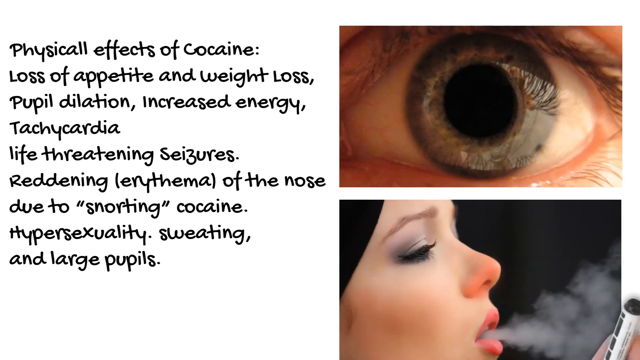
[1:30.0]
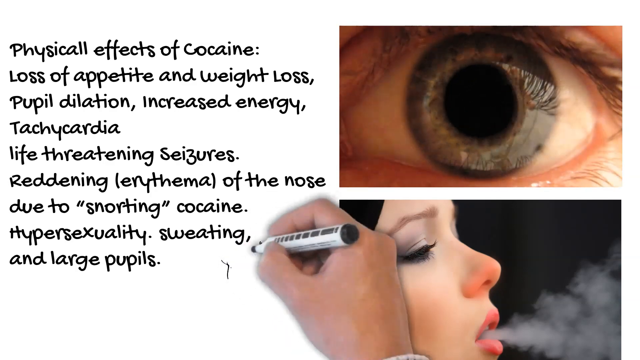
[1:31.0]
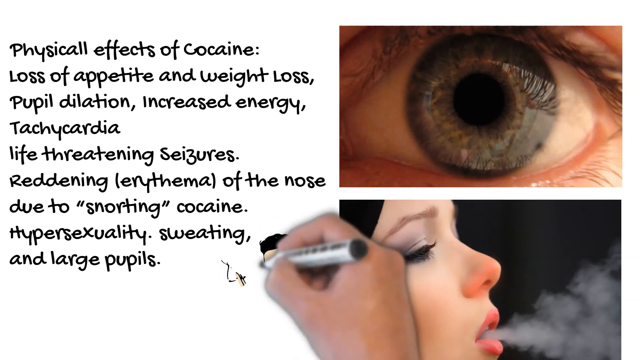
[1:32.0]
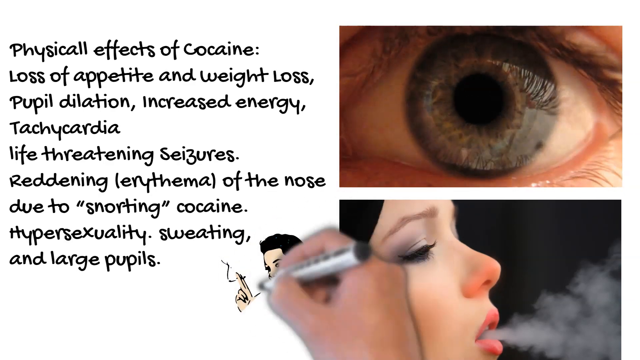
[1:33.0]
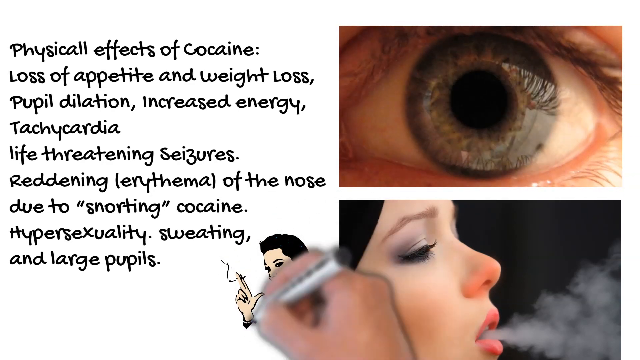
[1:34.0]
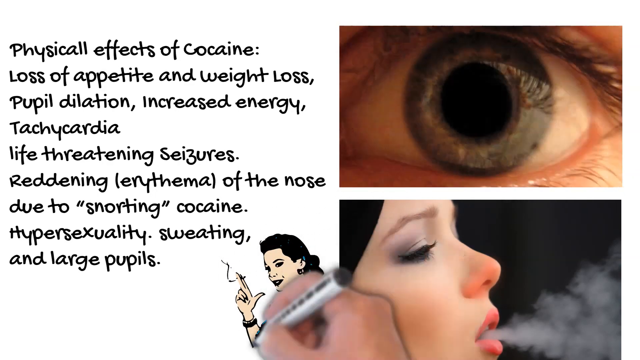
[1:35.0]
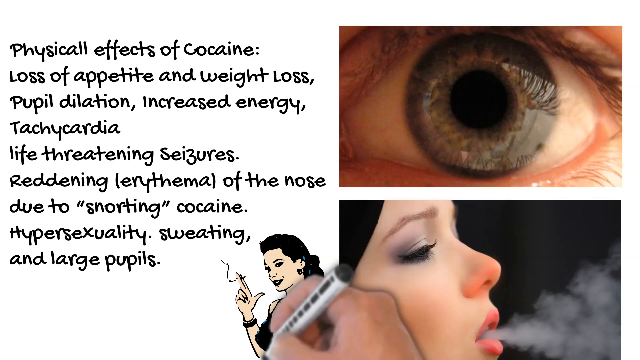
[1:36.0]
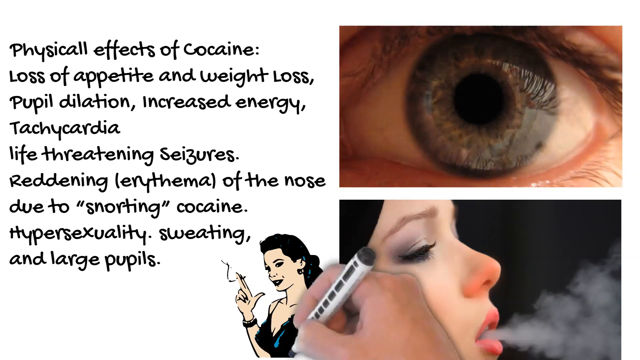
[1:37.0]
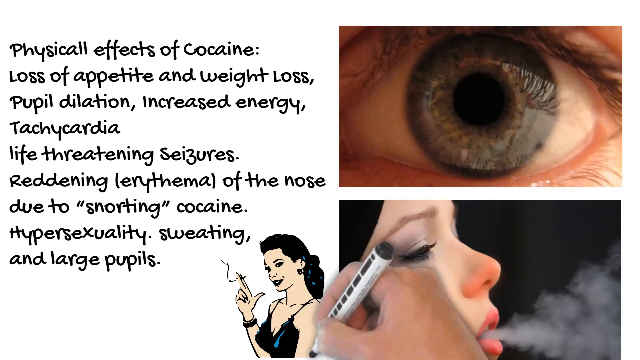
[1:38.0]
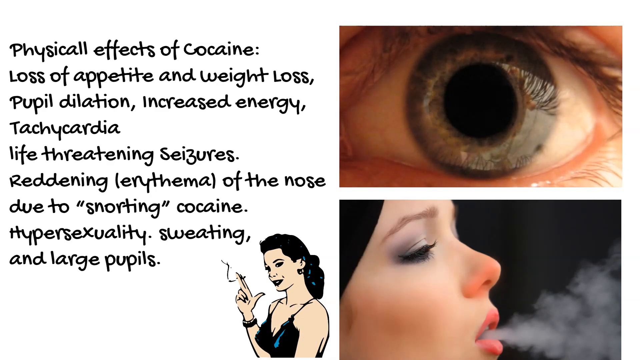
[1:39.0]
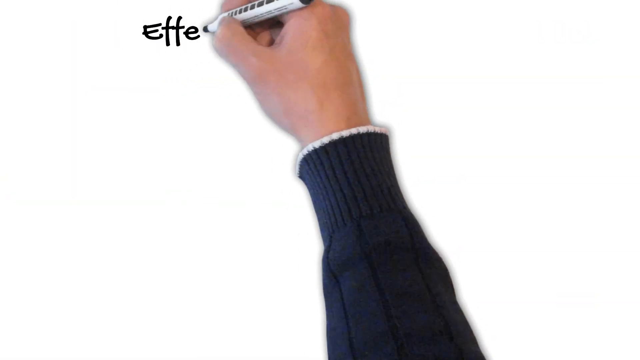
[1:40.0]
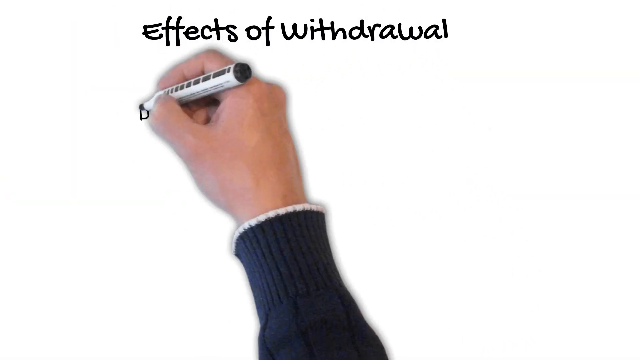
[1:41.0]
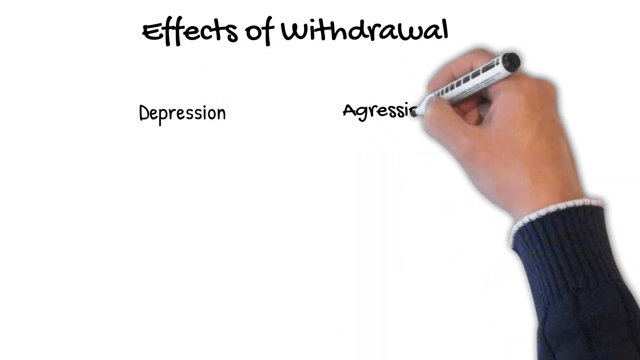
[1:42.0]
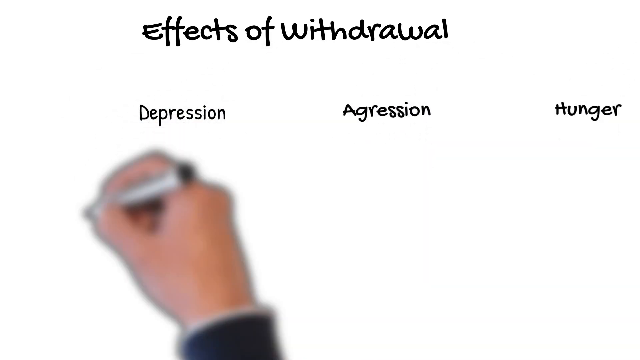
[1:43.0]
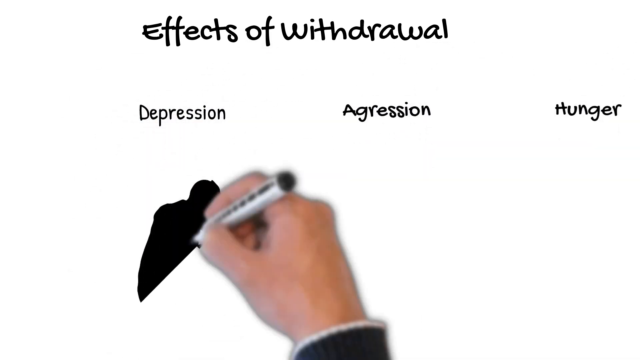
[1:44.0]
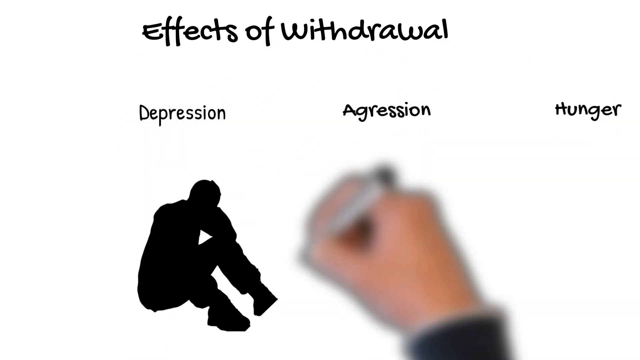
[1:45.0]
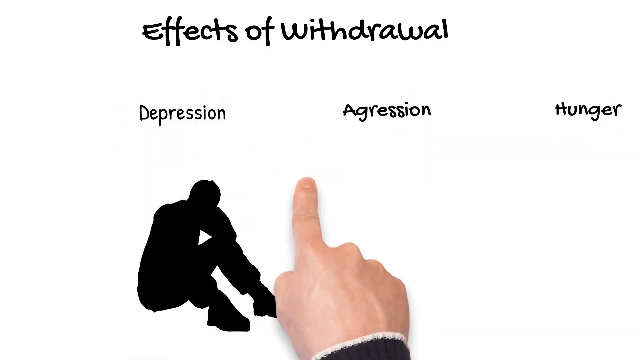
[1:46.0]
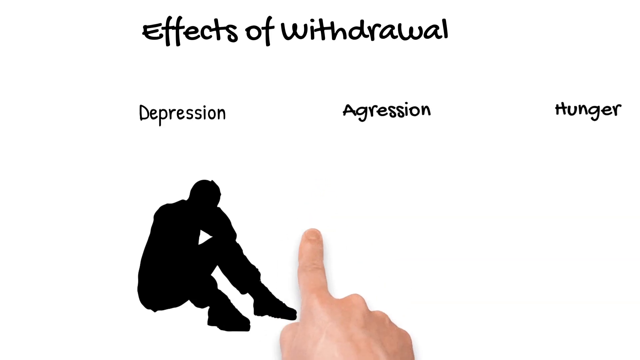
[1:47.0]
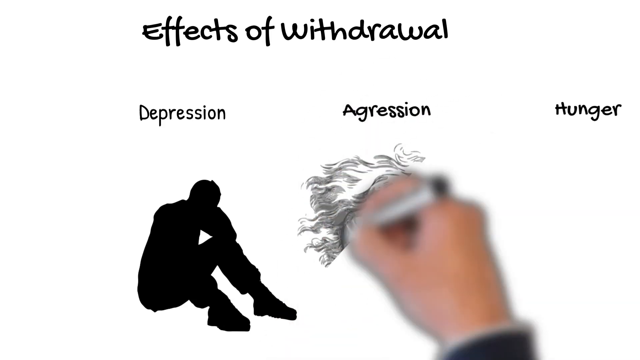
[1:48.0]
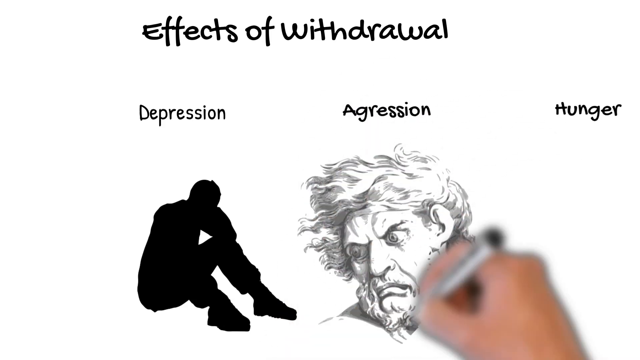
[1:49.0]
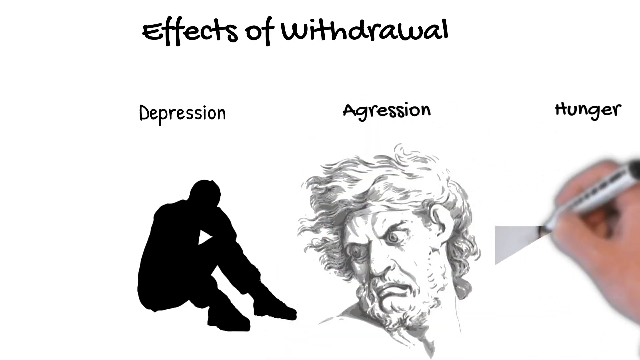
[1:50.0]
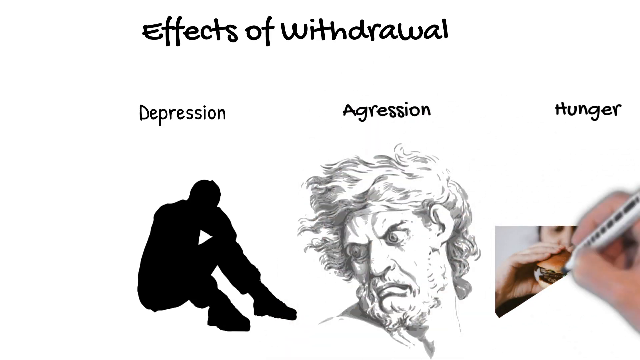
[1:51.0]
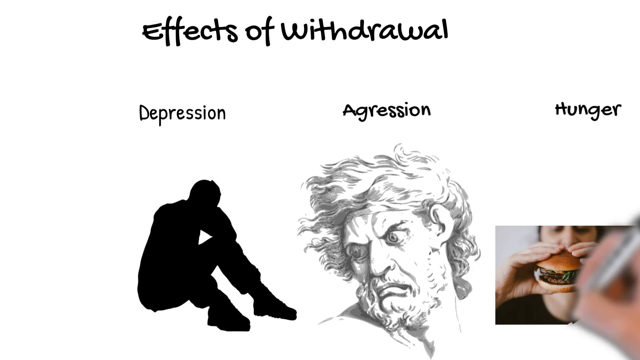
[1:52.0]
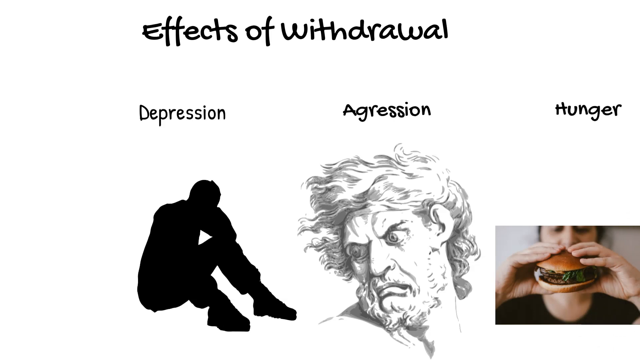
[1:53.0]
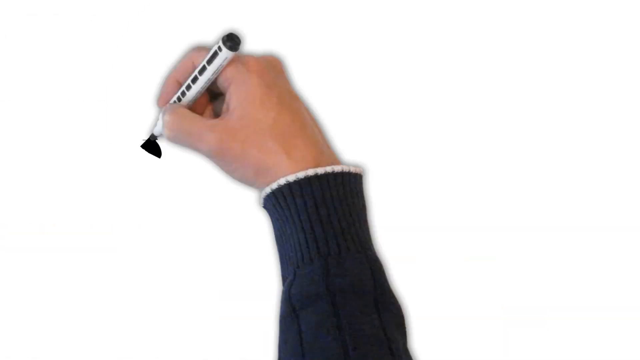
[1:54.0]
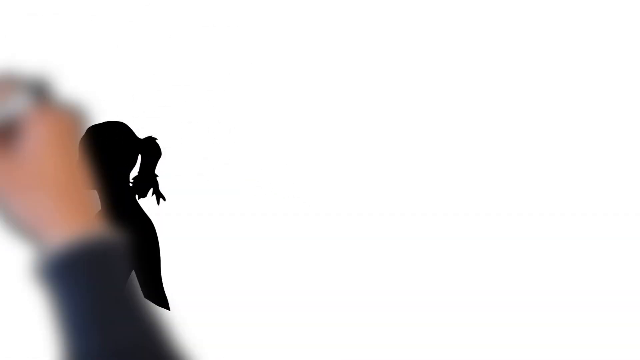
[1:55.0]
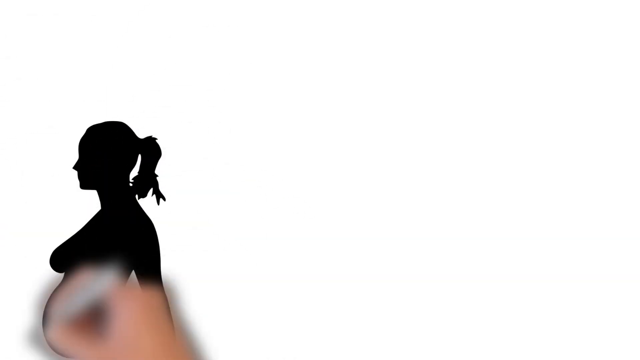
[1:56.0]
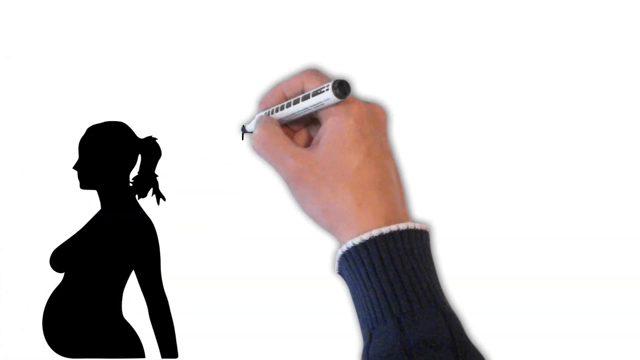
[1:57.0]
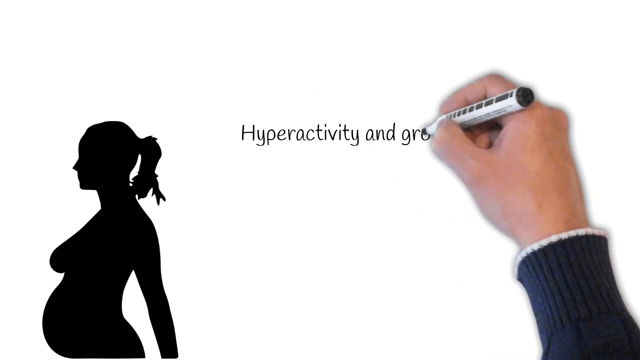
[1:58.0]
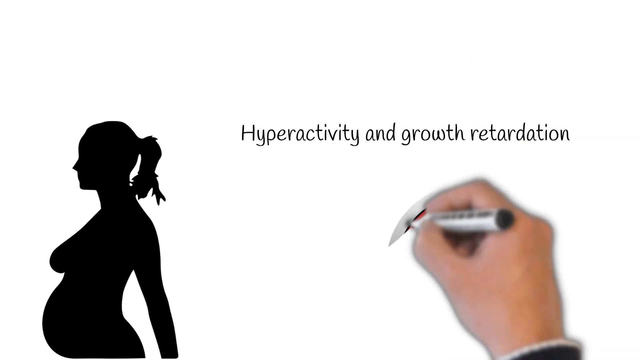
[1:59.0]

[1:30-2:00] On the right of a whiteboard are two pictures: the upper one is an eyeball dilating in and out, and below it is a woman with a red nose blowing smoke out of her mouth. On the left are details about the physical effects of cocaine. The animated hand draws a picture of a woman from the 1950s wearing a nightgown and smoking a cigarette held in her right hand. That slide is then pushed to the left, and the hand starts writing on the next whiteboard. At the top it says "effects of withdrawal," and below are three columns: "depression," "aggression," and "hunger." Under depression, the hand draws someone sitting on the ground with their elbows on their knees, looking down. Under aggression is a drawing of what may be Ulysses or one of the ancients of Rome, looking full of anger. Under hunger is someone trying to eat a double burger, holding the burger in front of their hands. In the next scene, a female silhouette, all in black, appears on the left side as if unclothed, possibly pregnant, and to the right it says "hyperactivity and growth retardation."